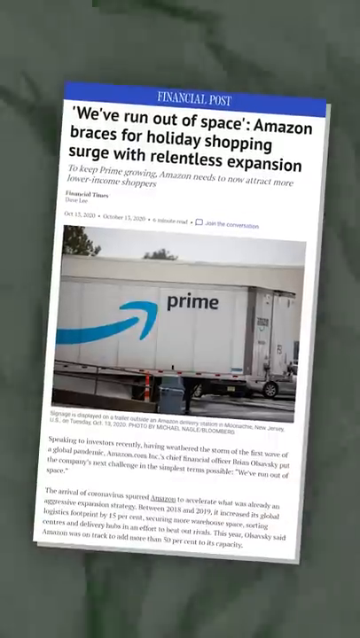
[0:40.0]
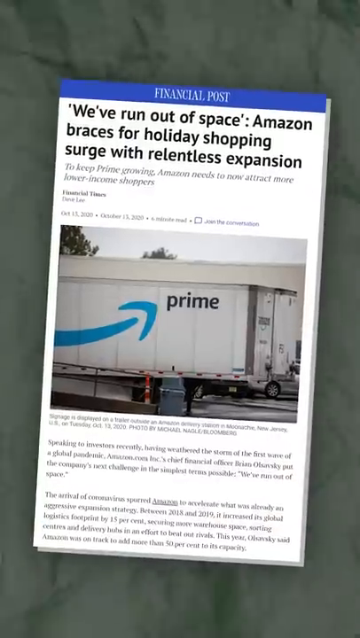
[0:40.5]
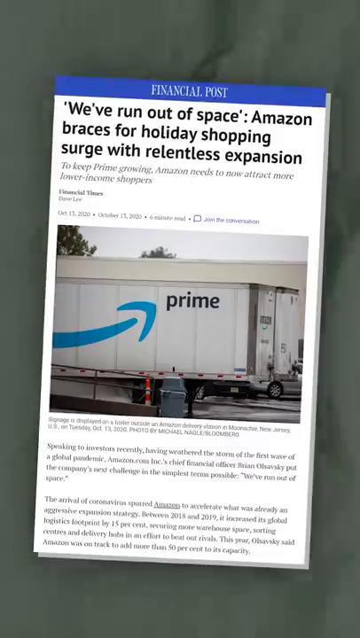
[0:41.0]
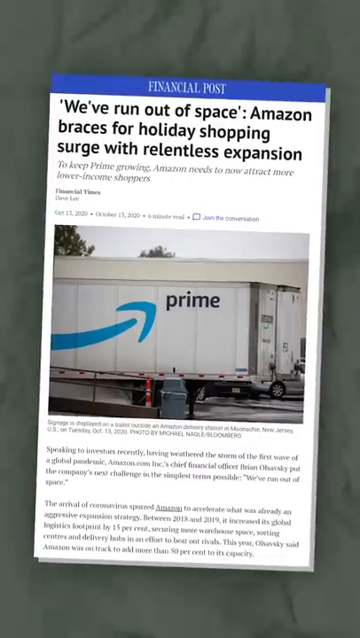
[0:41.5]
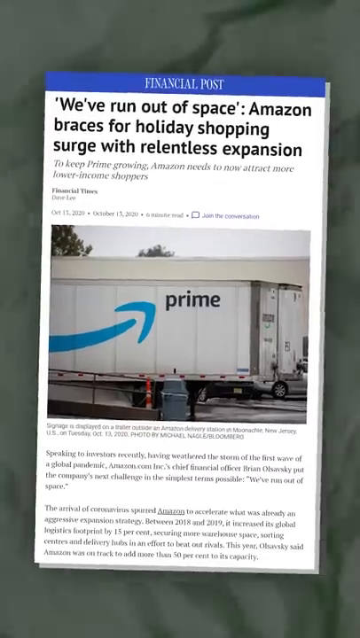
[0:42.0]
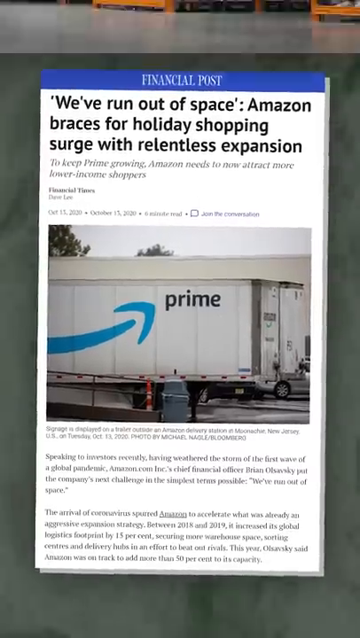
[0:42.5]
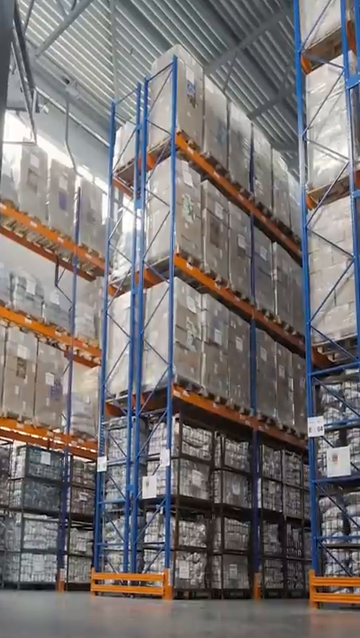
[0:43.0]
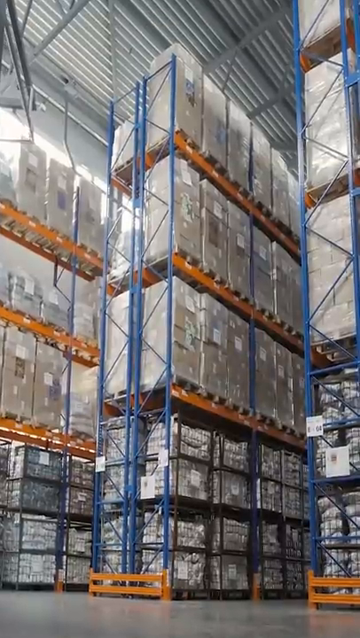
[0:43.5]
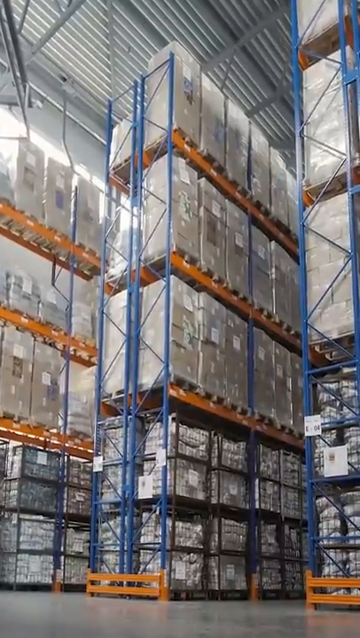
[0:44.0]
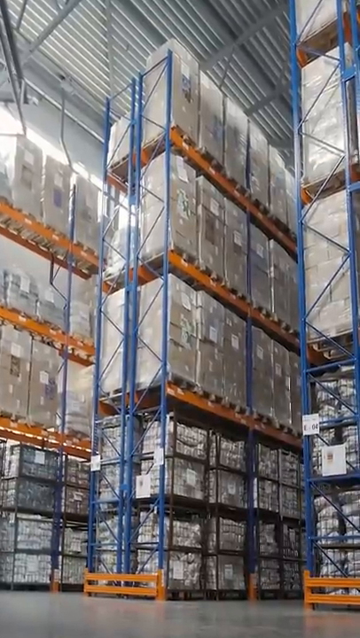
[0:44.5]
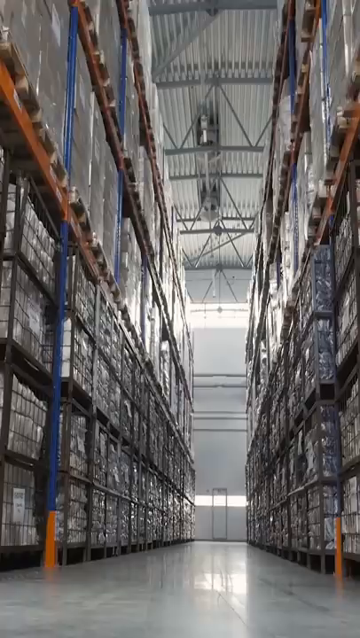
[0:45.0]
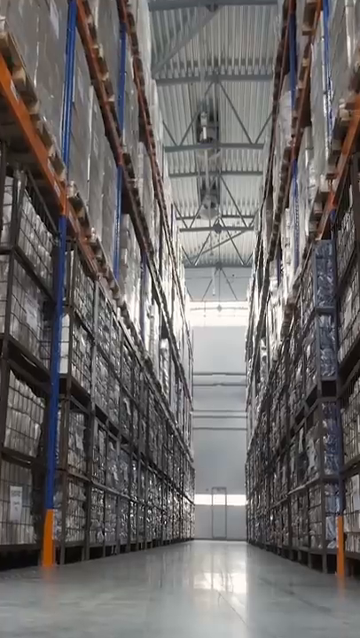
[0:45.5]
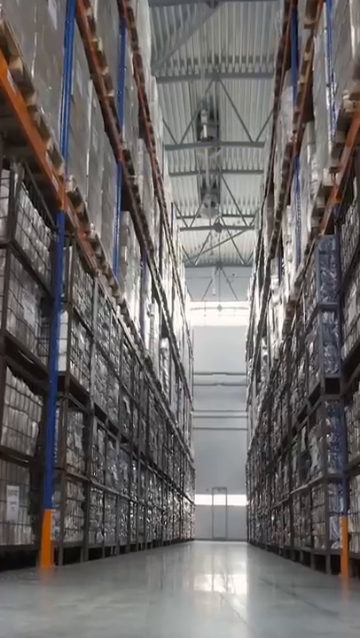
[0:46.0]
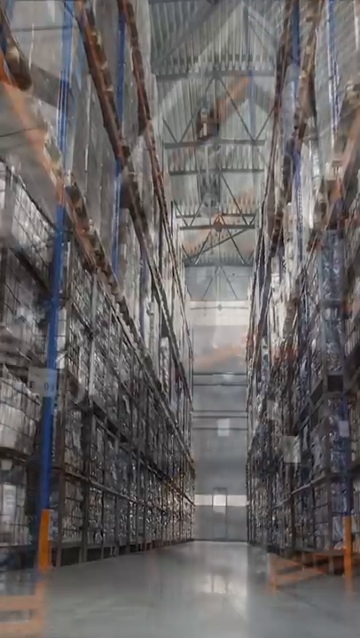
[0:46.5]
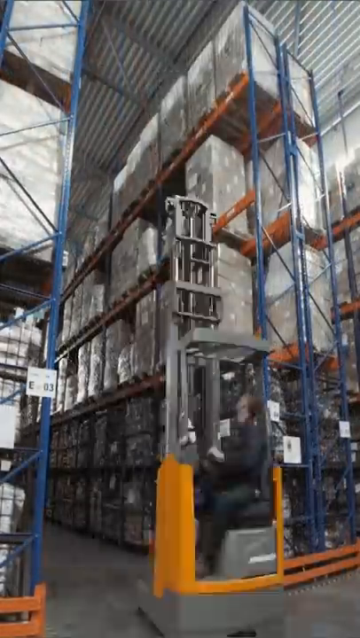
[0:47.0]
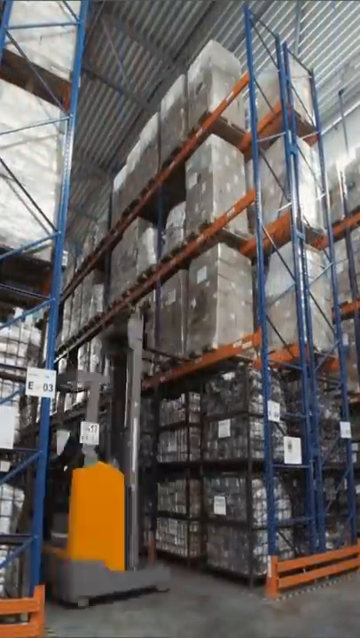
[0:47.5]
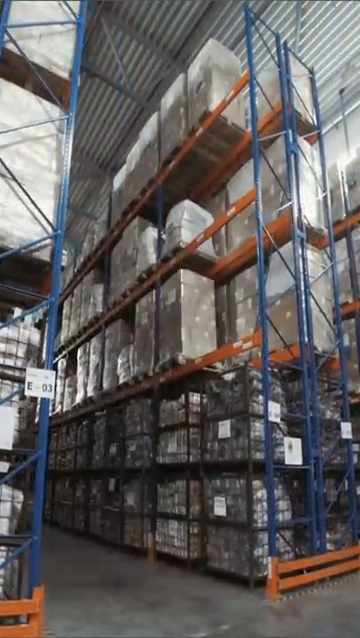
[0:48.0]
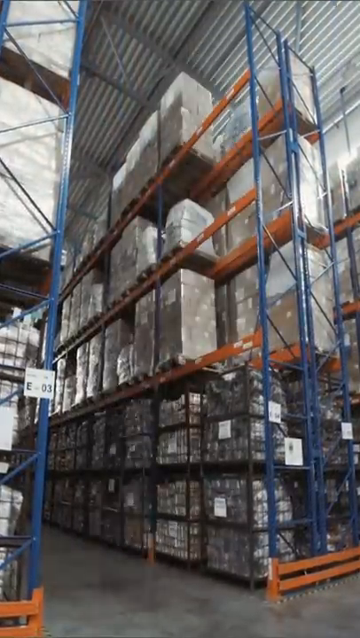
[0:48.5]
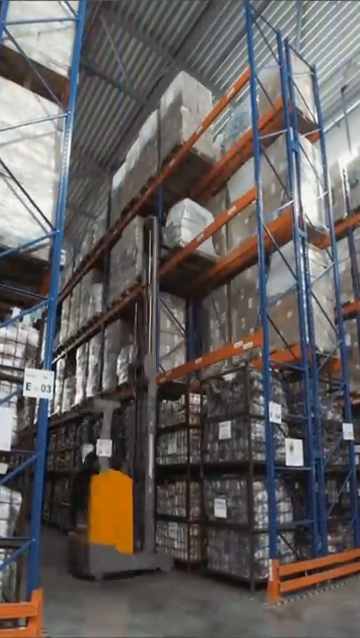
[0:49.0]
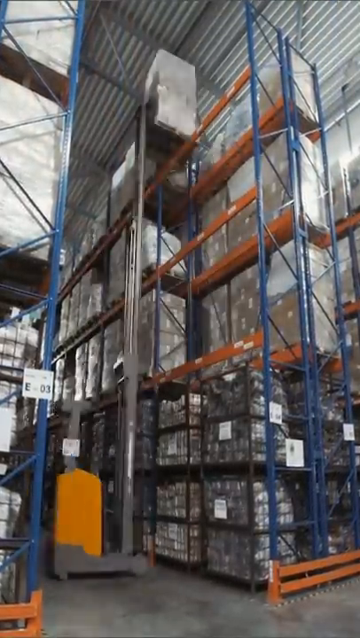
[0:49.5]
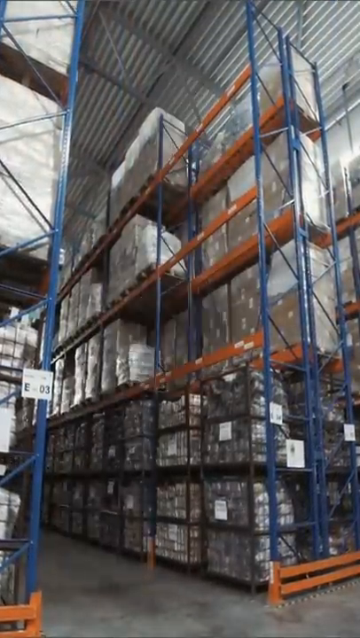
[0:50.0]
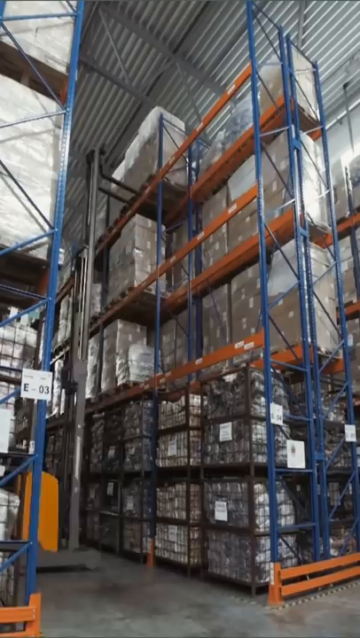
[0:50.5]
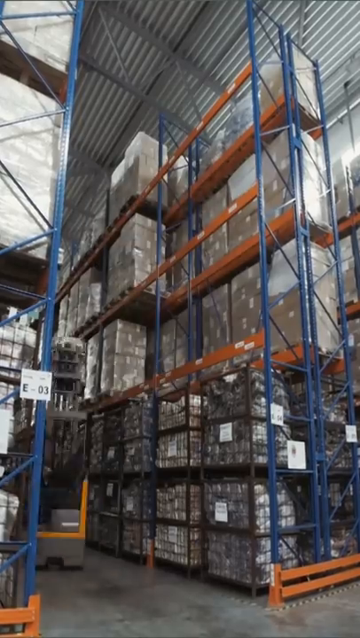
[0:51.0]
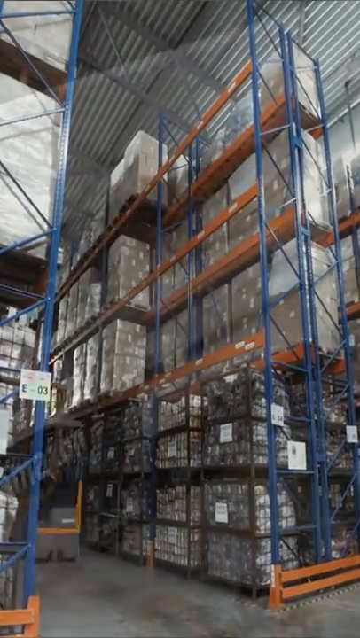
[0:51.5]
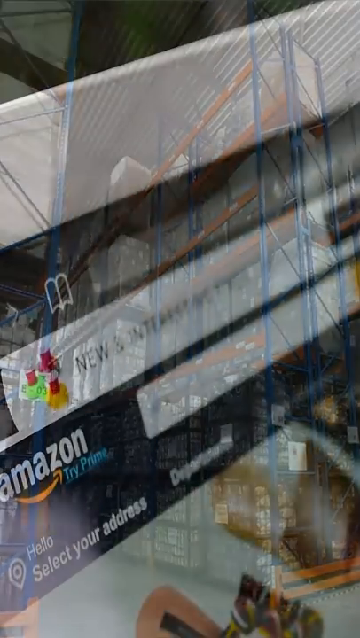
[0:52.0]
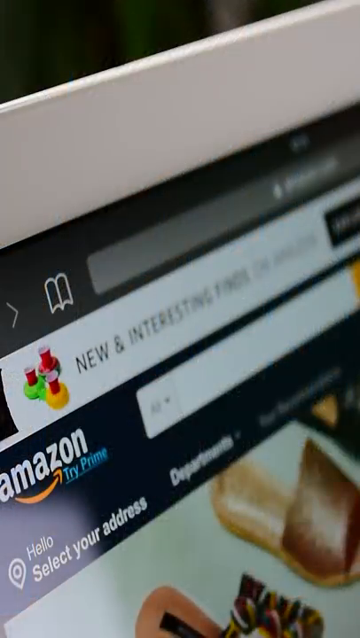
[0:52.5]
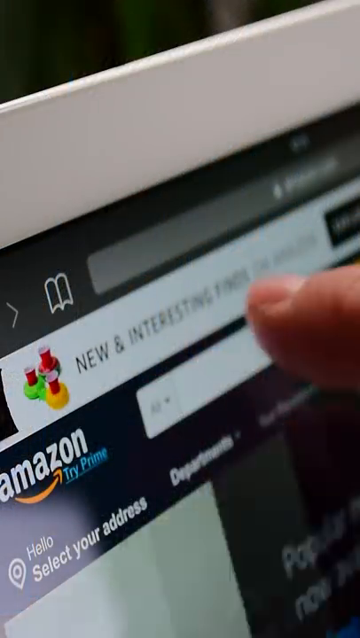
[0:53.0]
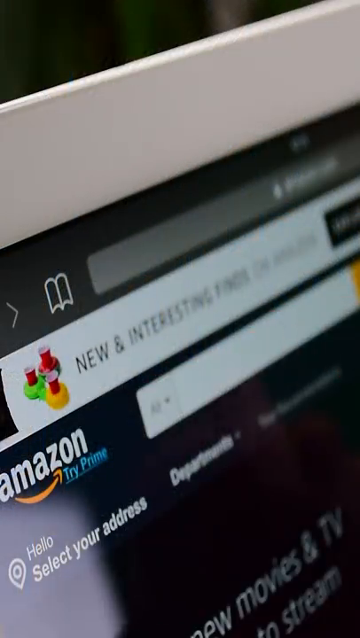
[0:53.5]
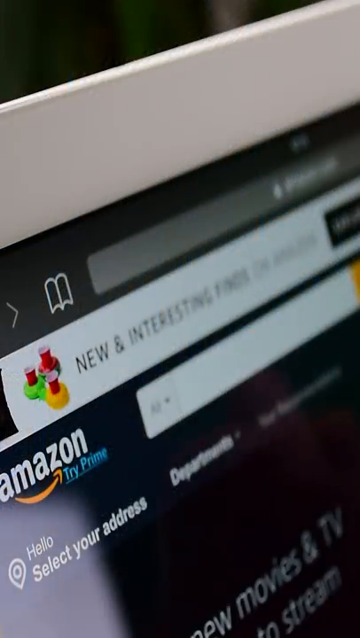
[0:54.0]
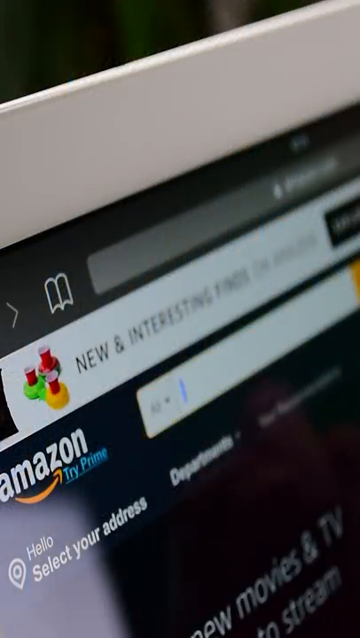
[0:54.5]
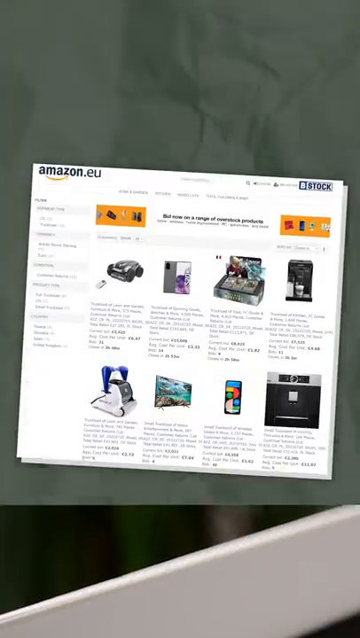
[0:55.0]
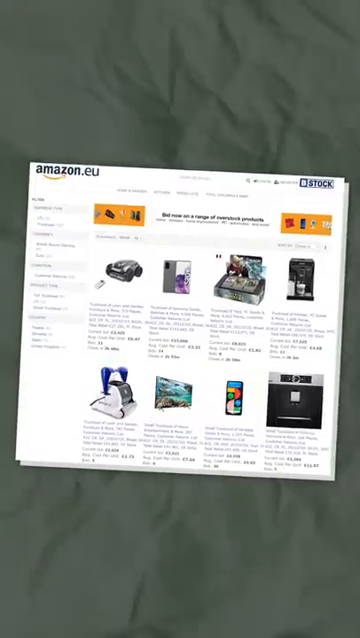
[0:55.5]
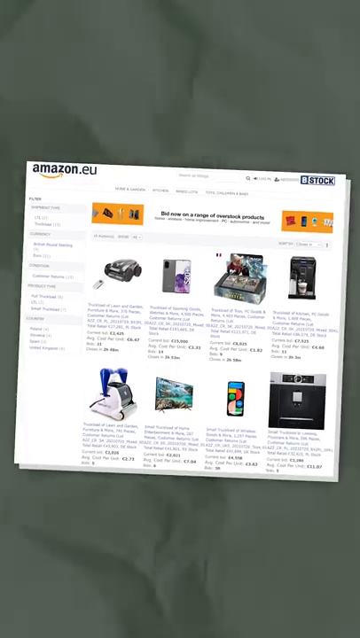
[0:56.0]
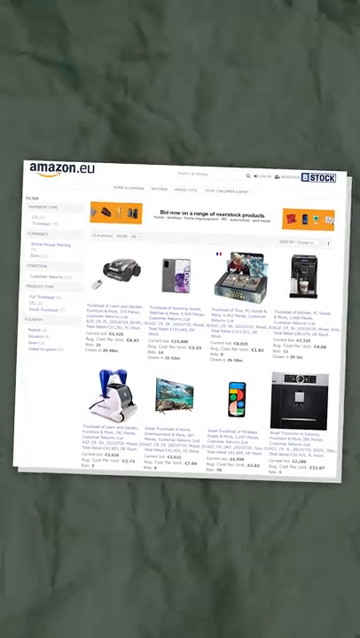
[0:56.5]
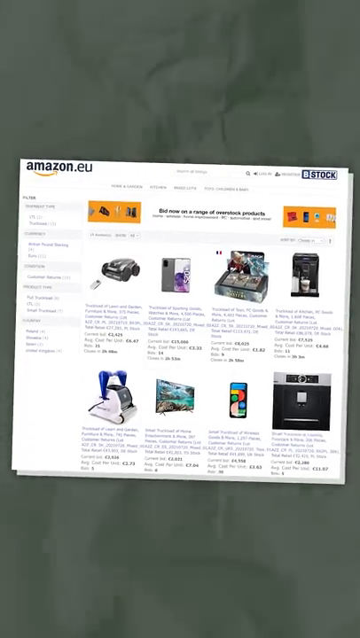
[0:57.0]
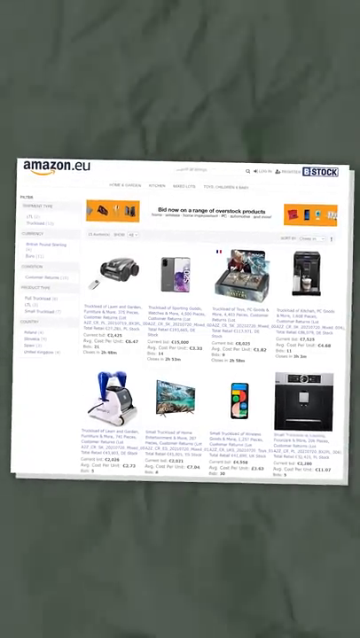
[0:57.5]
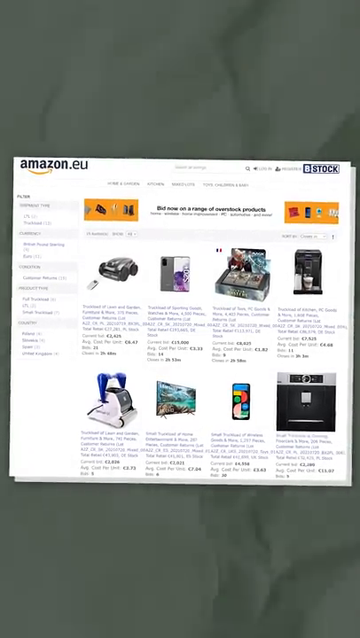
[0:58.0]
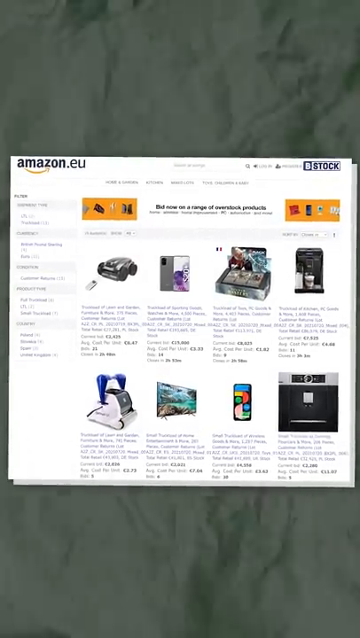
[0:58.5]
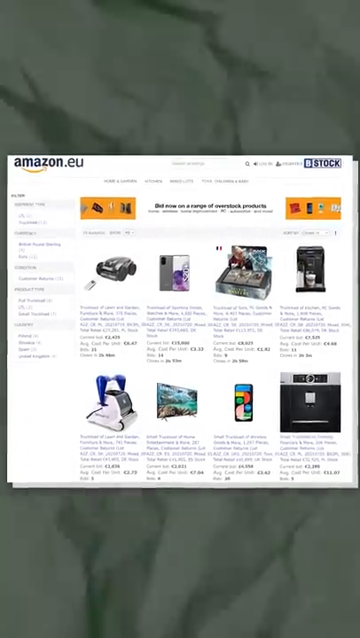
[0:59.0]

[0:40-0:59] Footage of storage areas is followed by a few brief edits of browsing. A green circle with a dollar sign and a question mark appears.